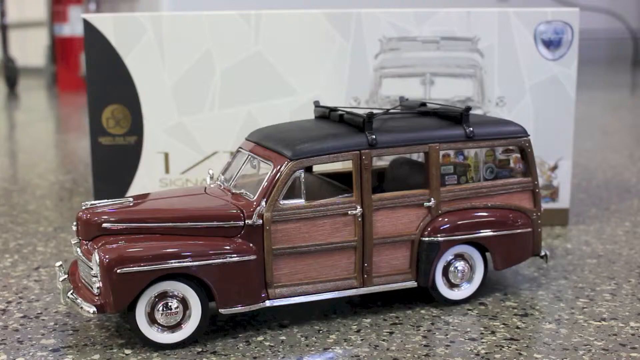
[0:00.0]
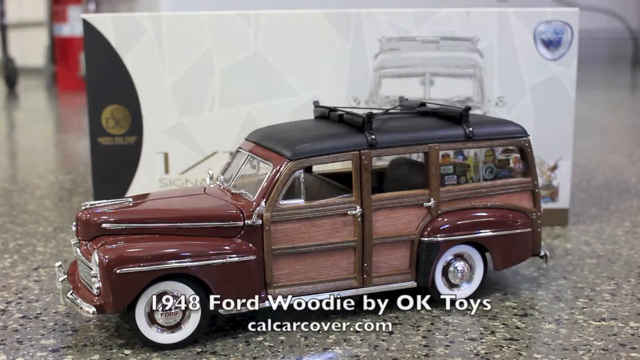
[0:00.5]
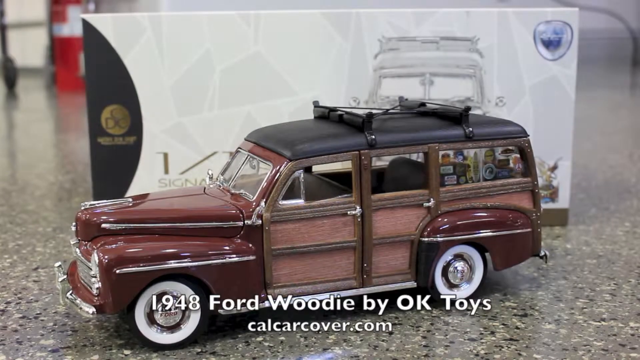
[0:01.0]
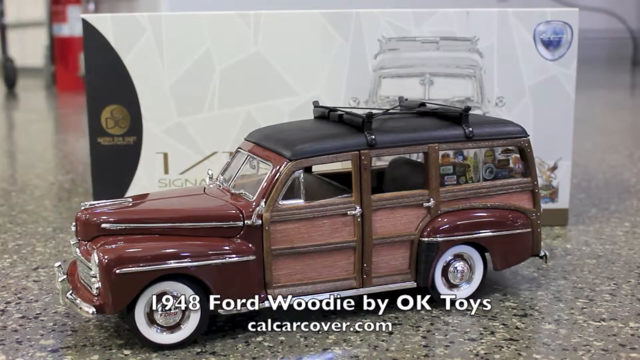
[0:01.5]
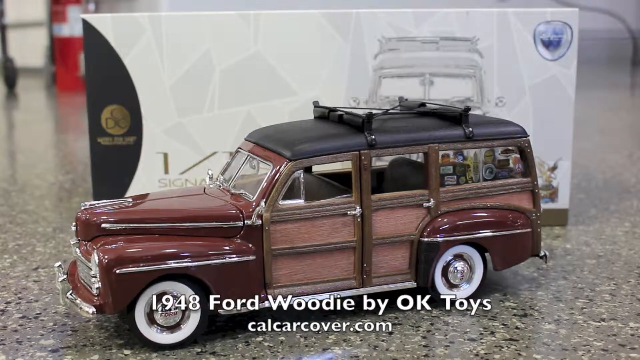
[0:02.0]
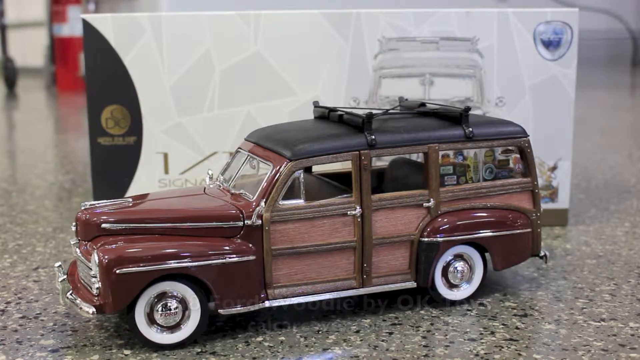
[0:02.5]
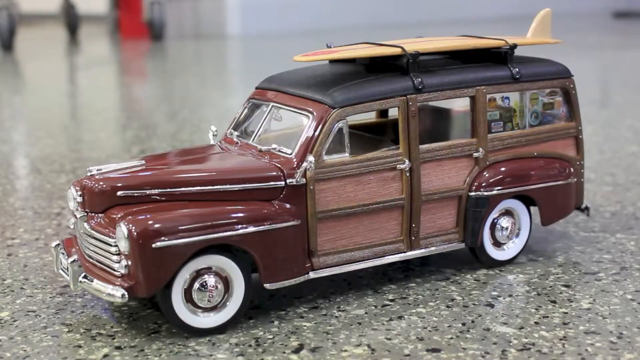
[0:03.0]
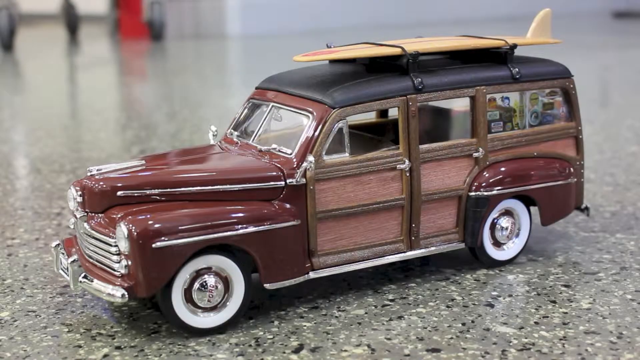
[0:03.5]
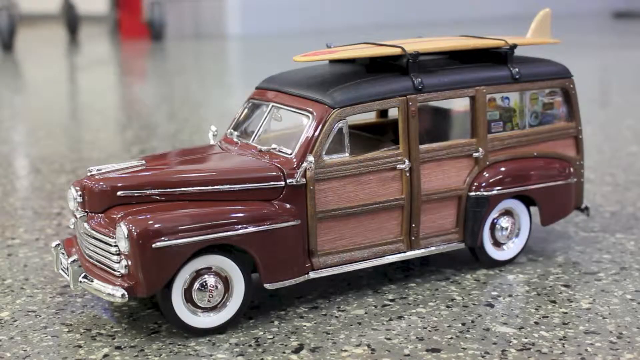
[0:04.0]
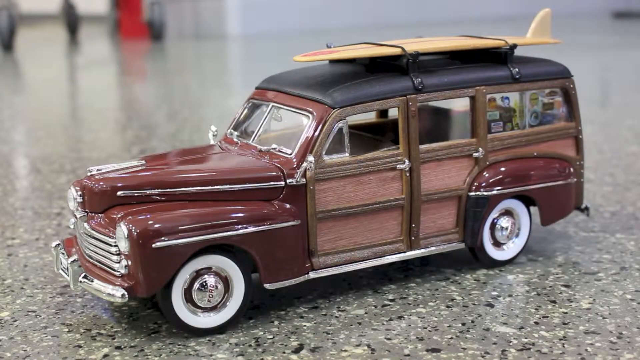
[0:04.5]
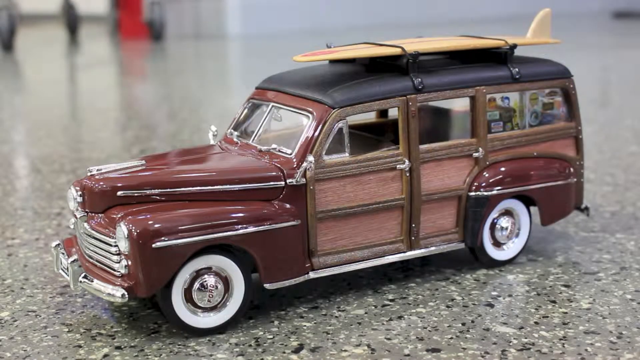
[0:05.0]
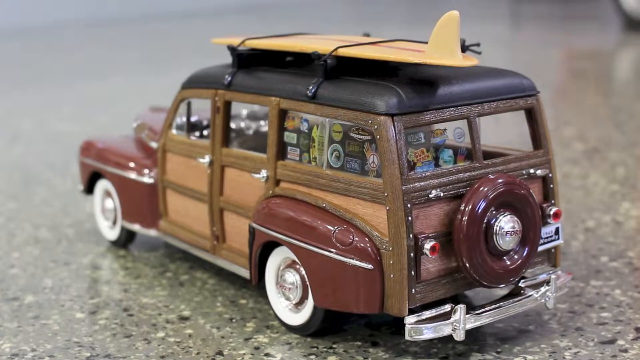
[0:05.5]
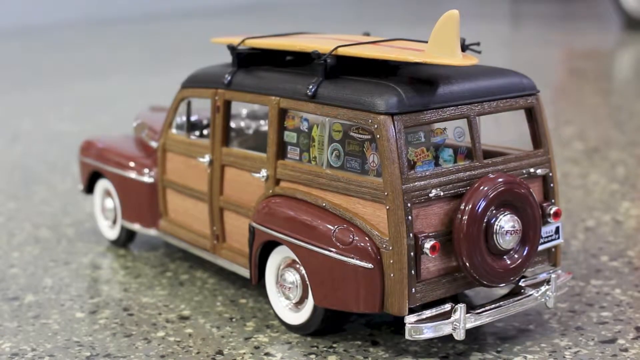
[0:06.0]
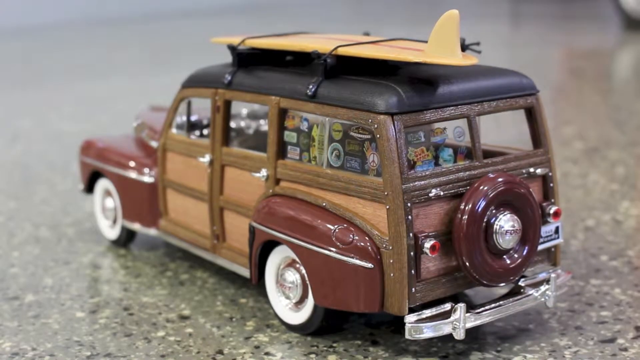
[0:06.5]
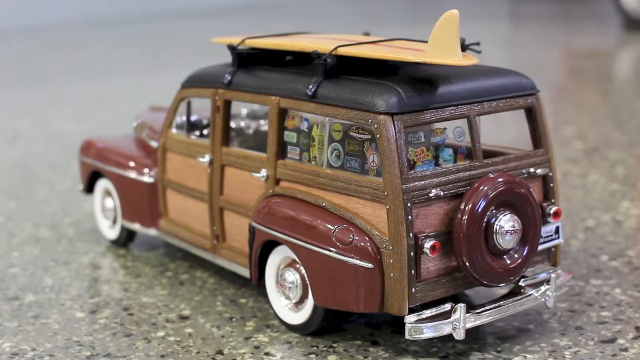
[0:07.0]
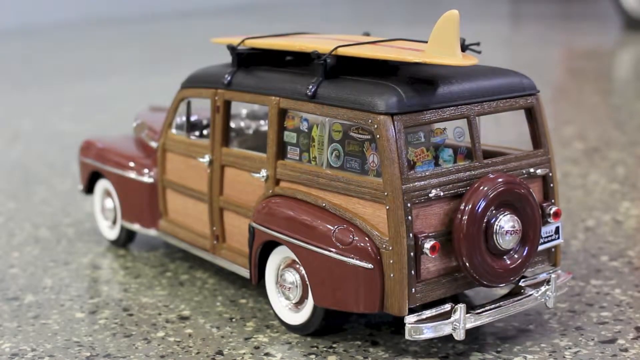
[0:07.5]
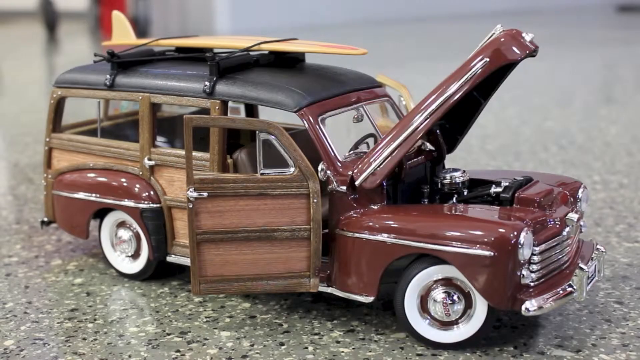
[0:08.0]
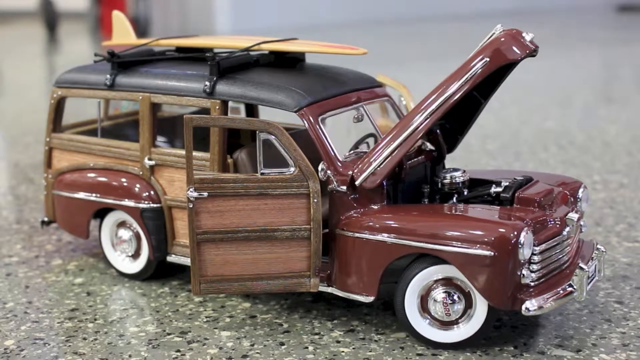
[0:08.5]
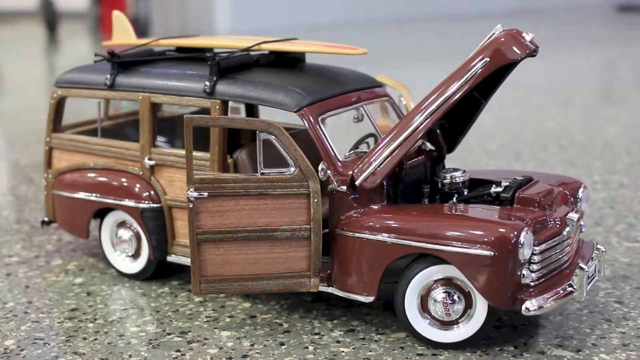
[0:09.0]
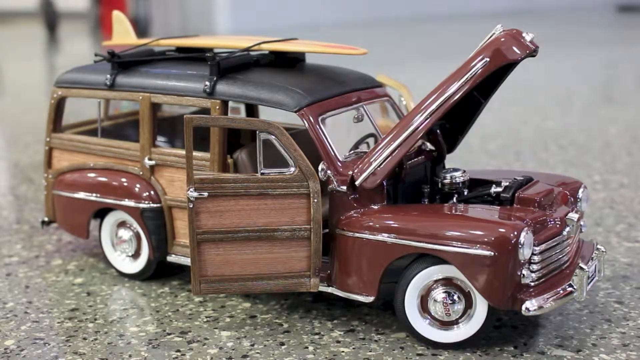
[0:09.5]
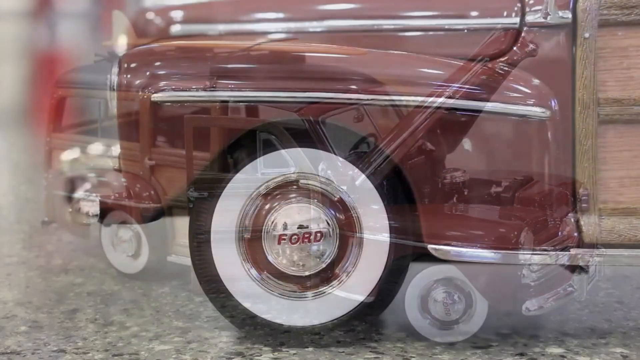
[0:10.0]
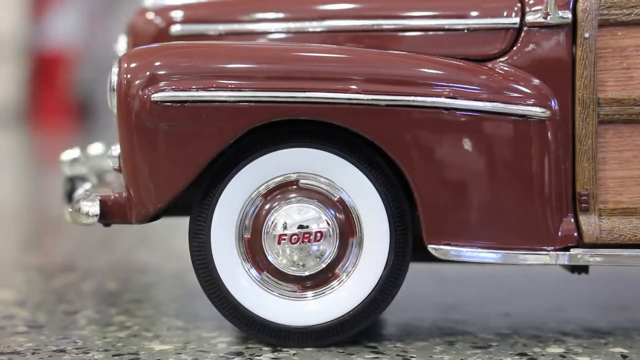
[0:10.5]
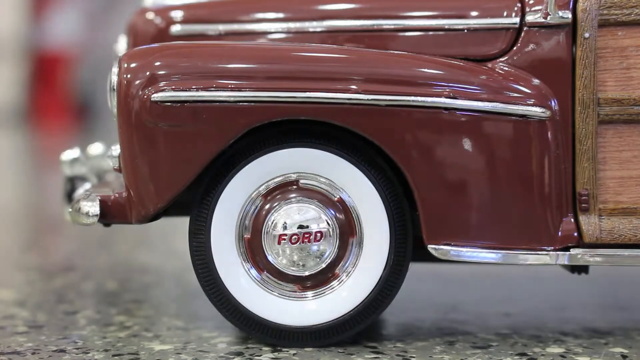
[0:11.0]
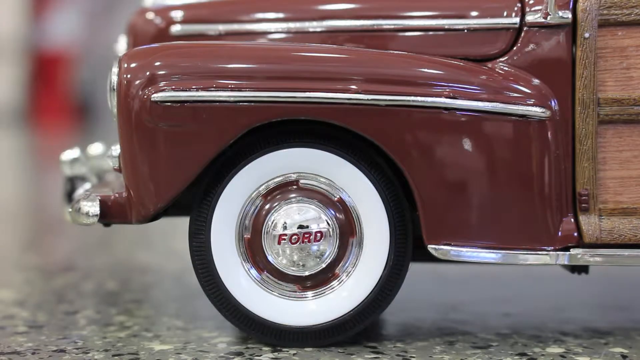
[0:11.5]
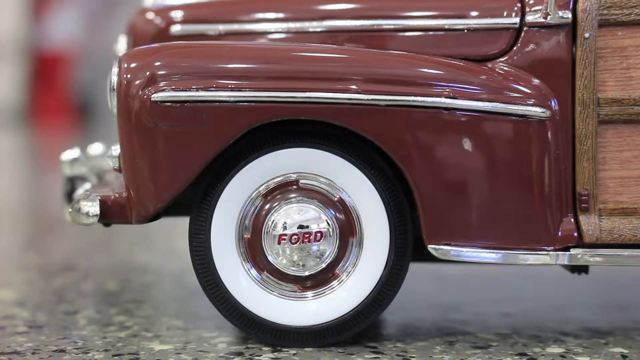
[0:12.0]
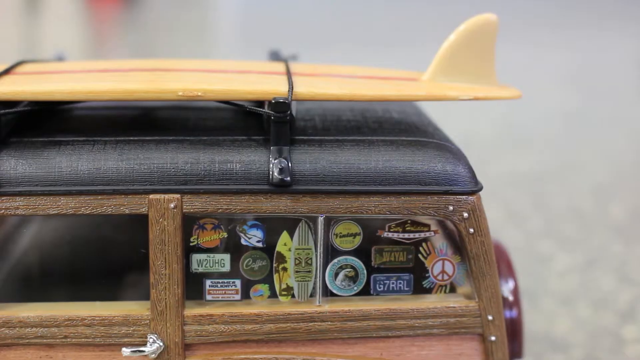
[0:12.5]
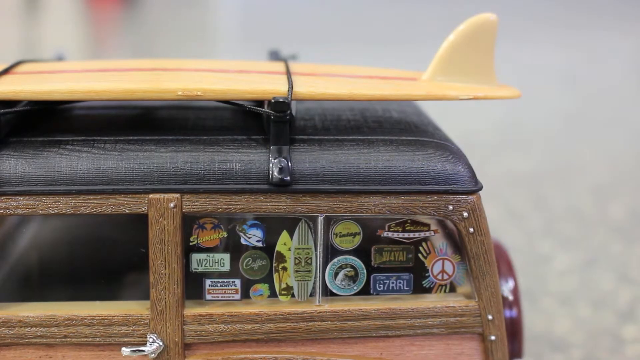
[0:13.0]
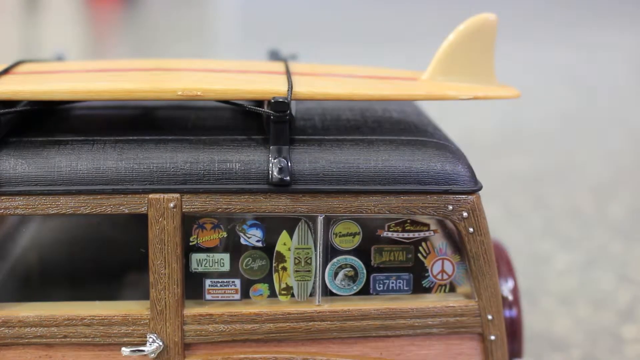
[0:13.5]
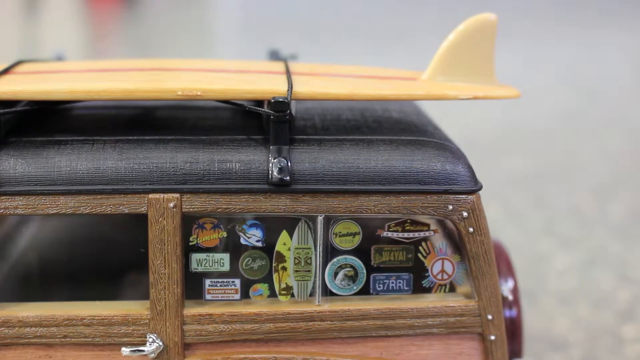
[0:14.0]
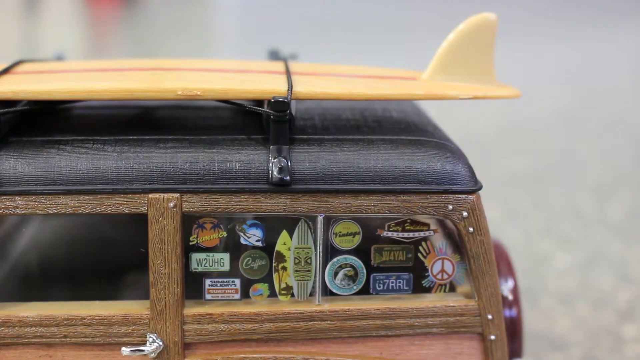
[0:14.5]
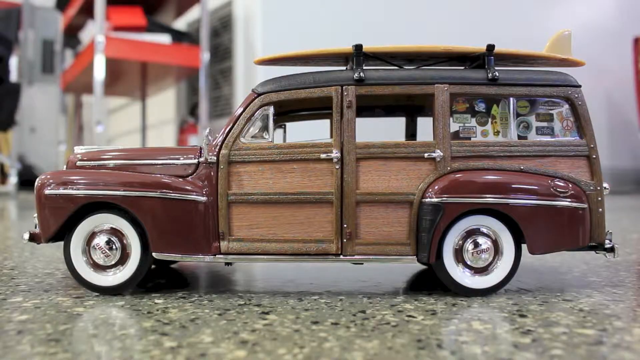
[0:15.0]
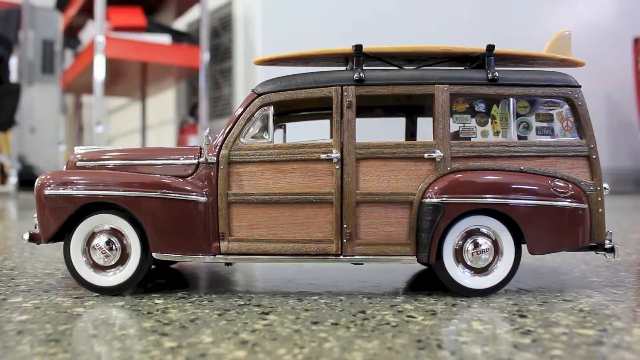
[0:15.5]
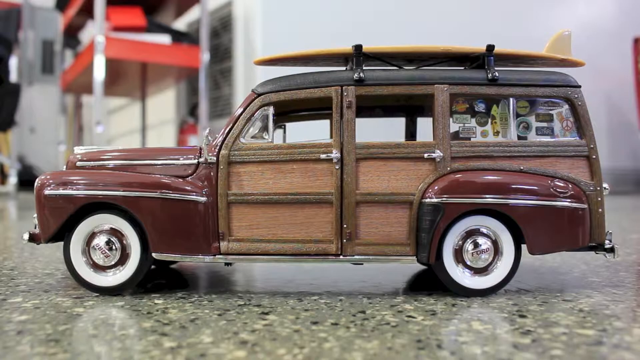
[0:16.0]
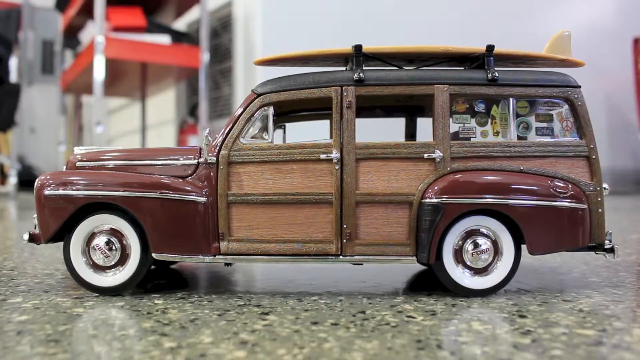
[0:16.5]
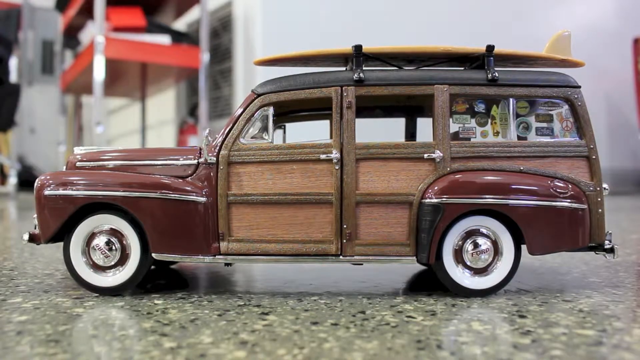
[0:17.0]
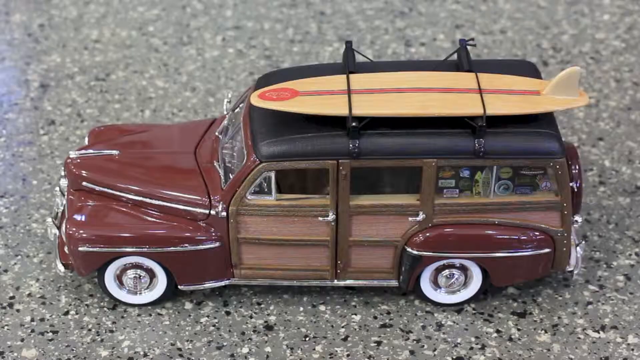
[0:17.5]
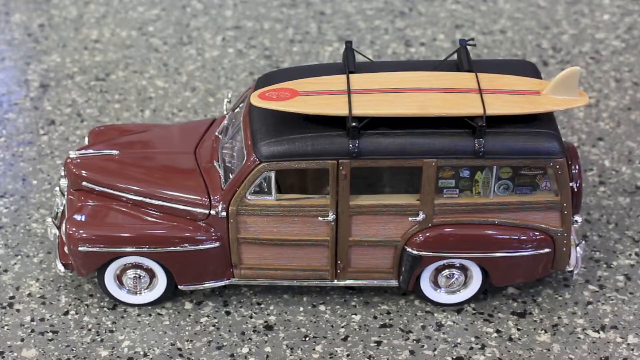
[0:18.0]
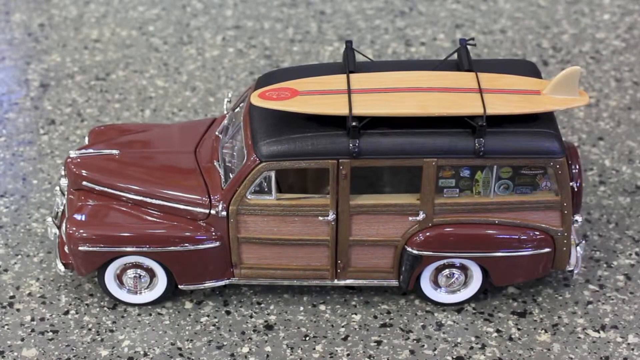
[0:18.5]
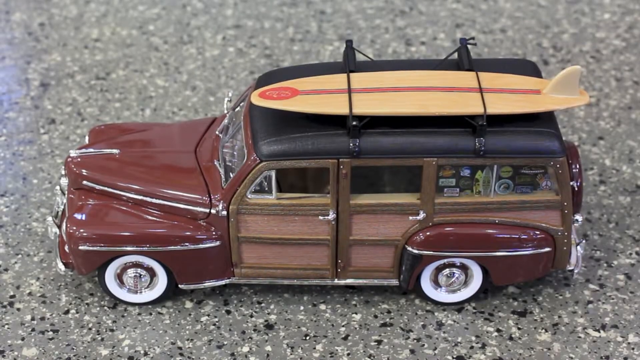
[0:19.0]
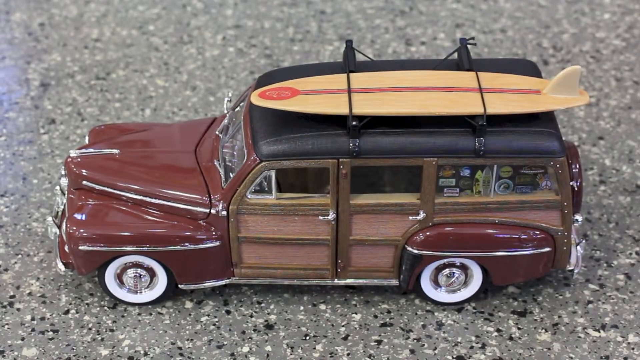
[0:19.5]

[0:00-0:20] A maroon toy car with wooden doors, a 1948 Ford Woody by OK Toys from the website carlcarcover.com, is showcased on marble flooring against a blurred-out background. Next, the car has a surfboard tied on its roof. An angular side view of the car follows, then the back view, showing stickers on its windows. Next comes the front, showing the car's engine, with the doors now open. Then the wheel appears, its rims bearing the word Ford in red. A closer view shows the yellow surfboard tied to the roof. A side view profile of the car follows, then a top view profile, and lastly the car's engine.